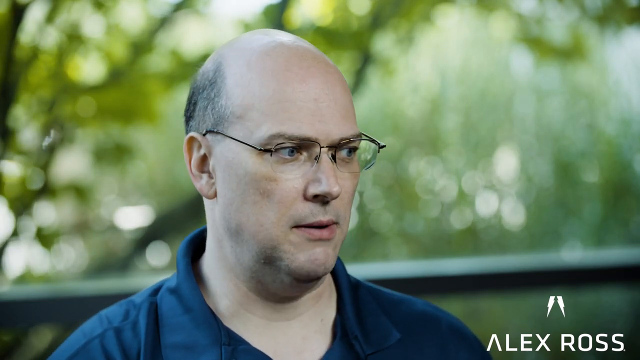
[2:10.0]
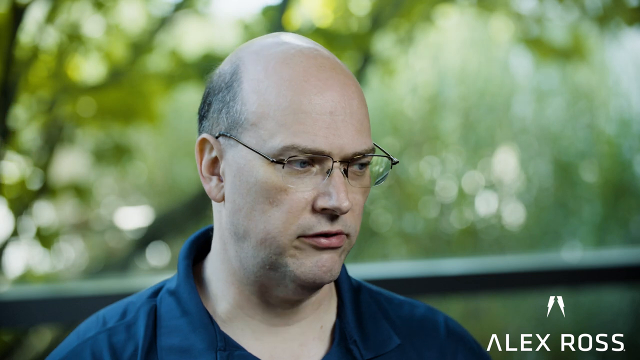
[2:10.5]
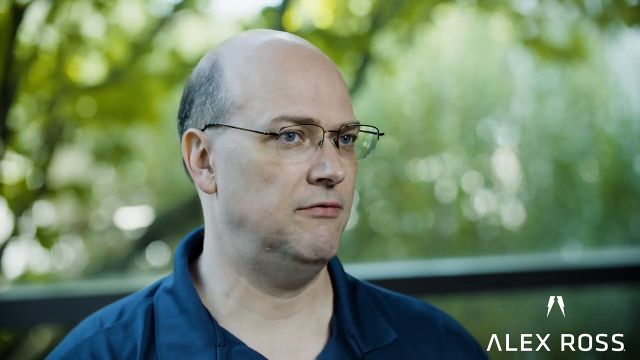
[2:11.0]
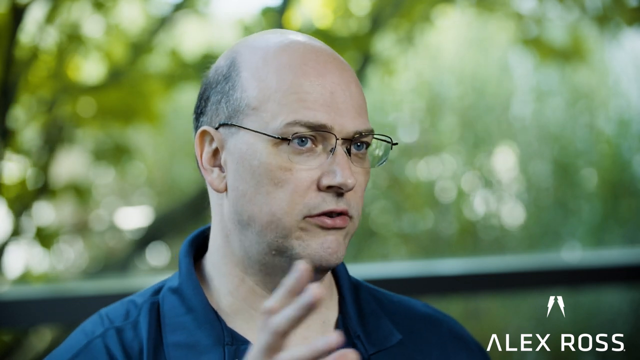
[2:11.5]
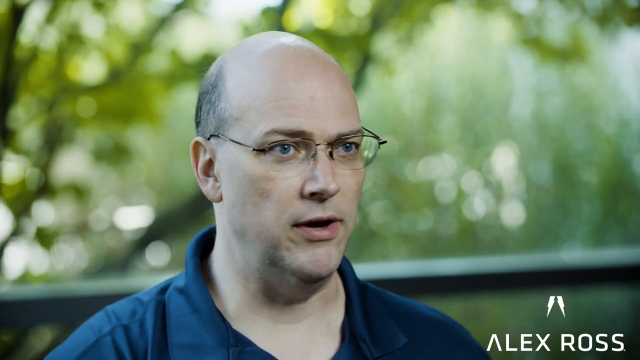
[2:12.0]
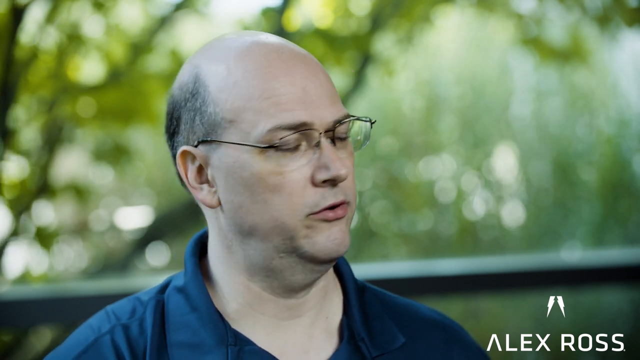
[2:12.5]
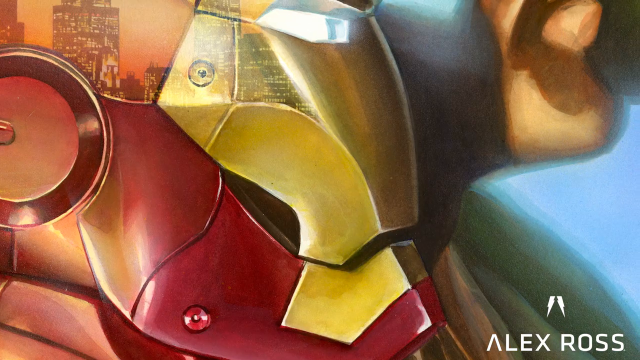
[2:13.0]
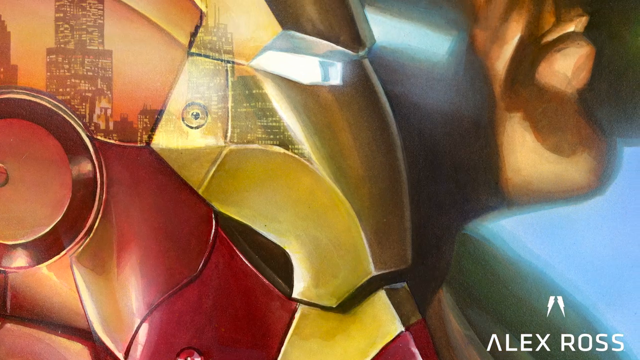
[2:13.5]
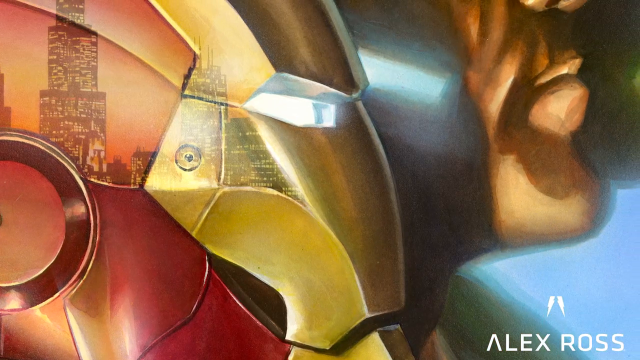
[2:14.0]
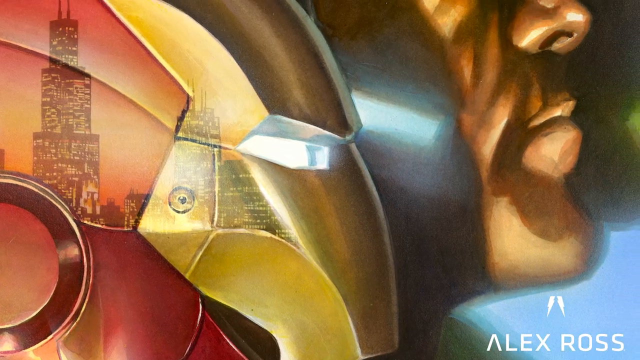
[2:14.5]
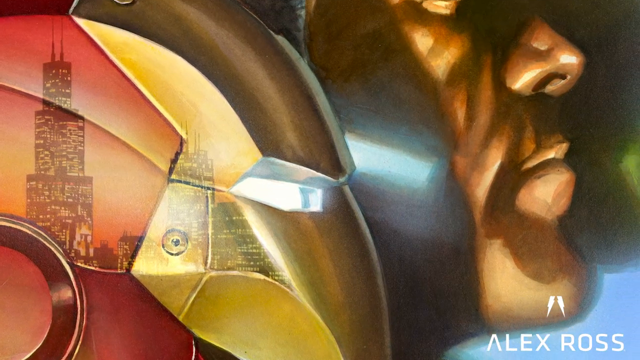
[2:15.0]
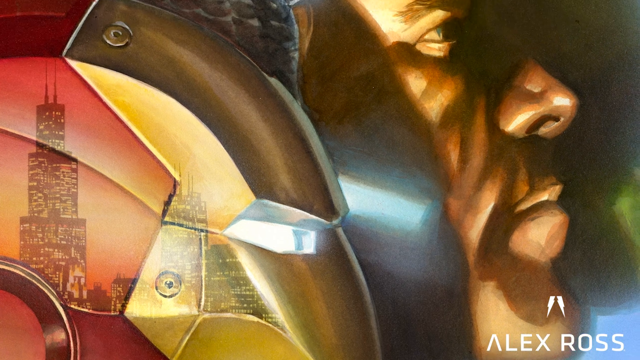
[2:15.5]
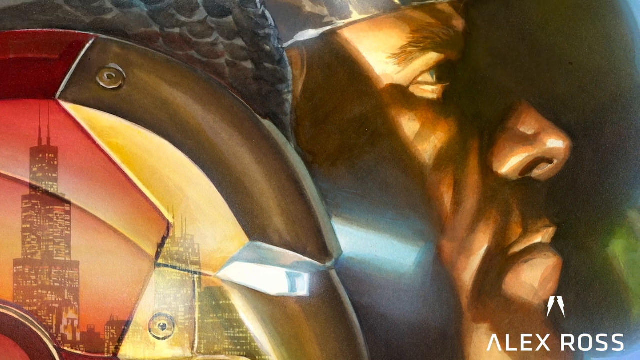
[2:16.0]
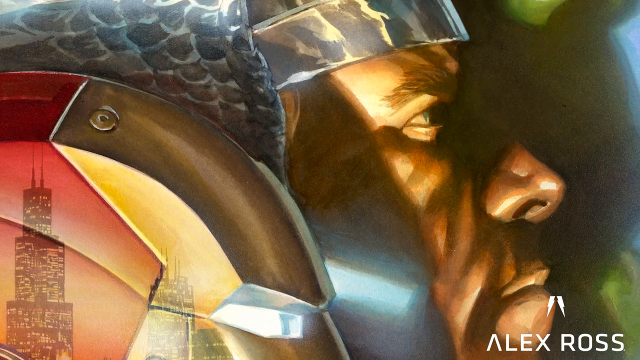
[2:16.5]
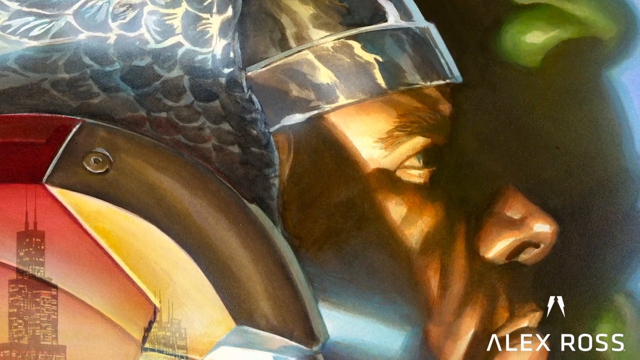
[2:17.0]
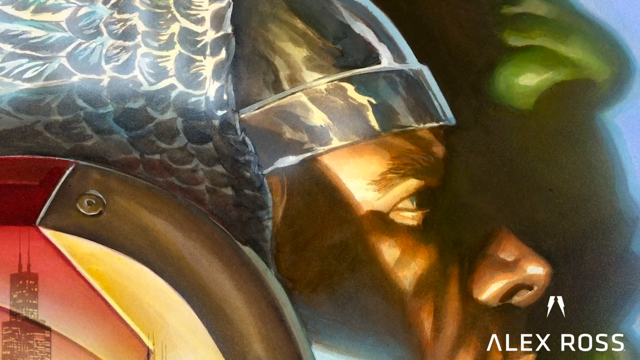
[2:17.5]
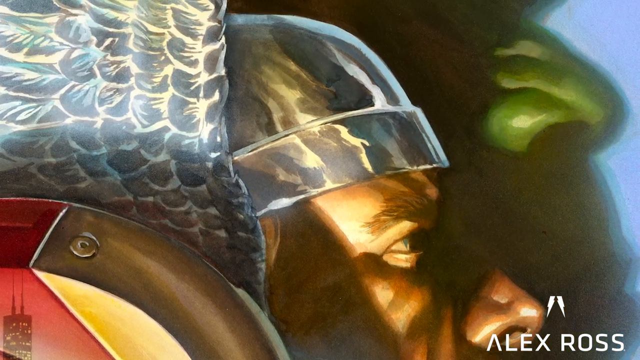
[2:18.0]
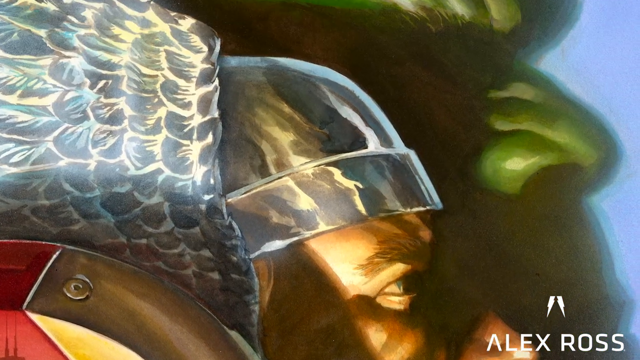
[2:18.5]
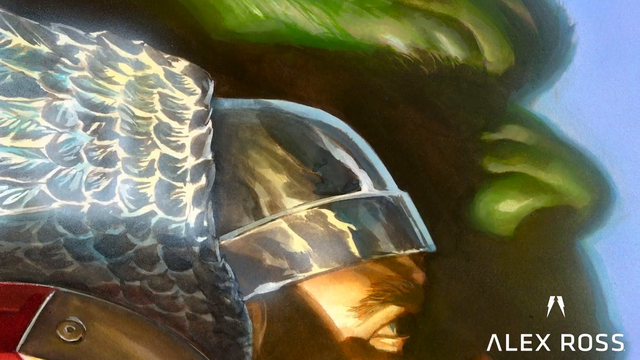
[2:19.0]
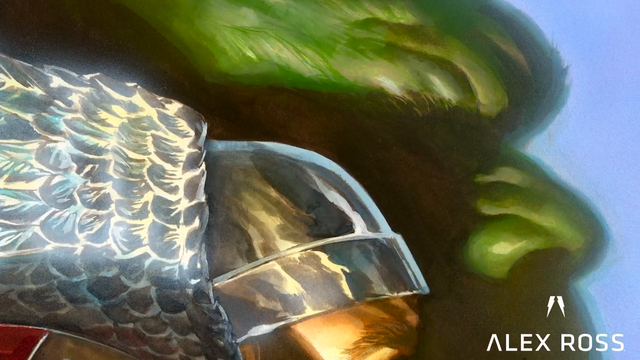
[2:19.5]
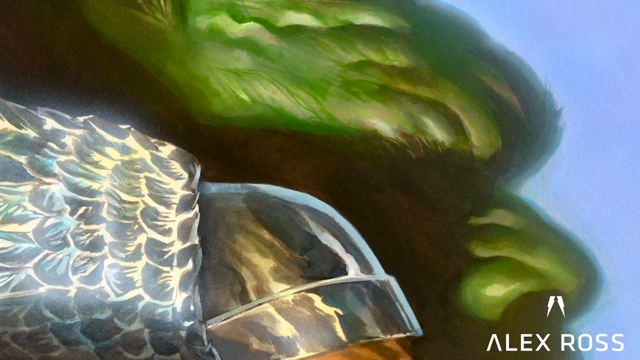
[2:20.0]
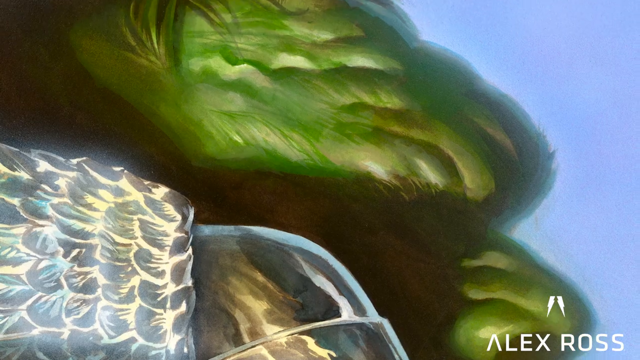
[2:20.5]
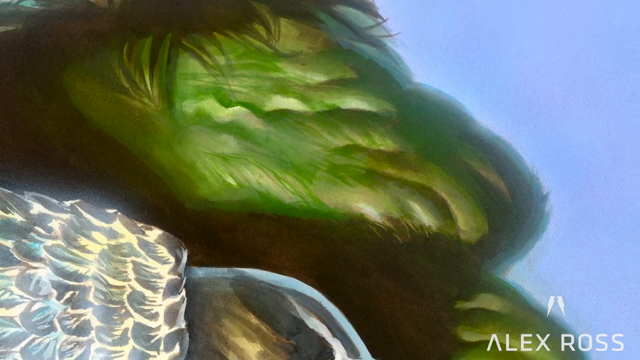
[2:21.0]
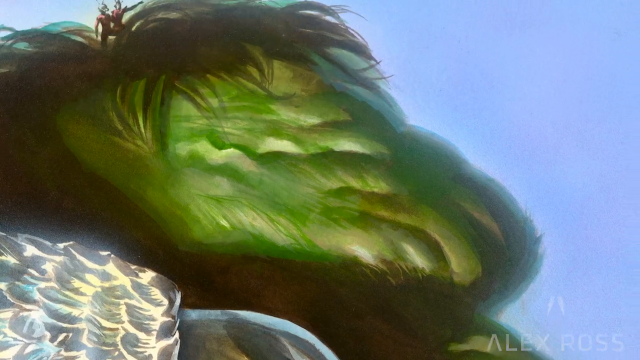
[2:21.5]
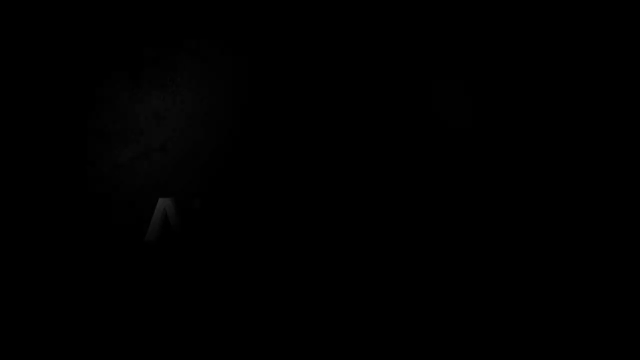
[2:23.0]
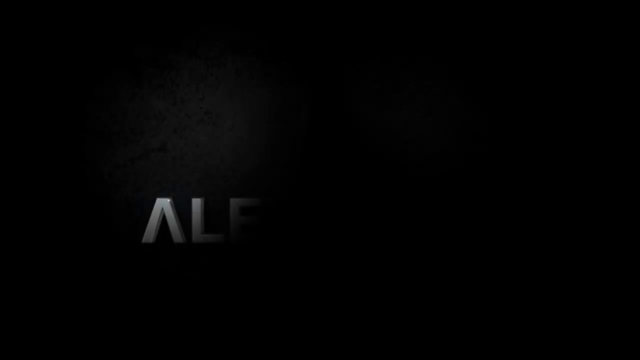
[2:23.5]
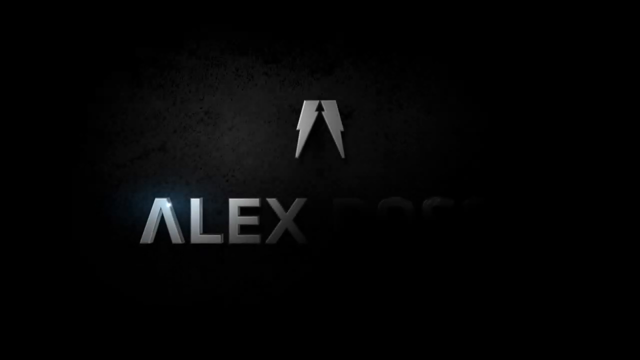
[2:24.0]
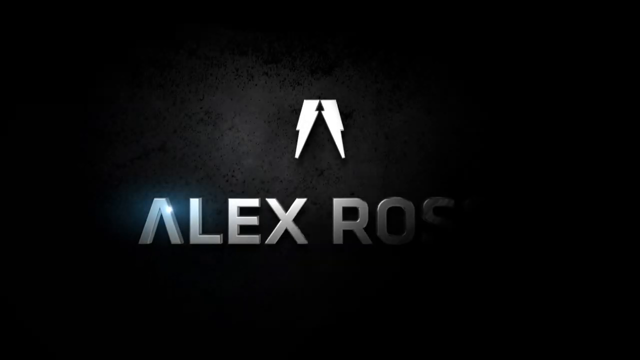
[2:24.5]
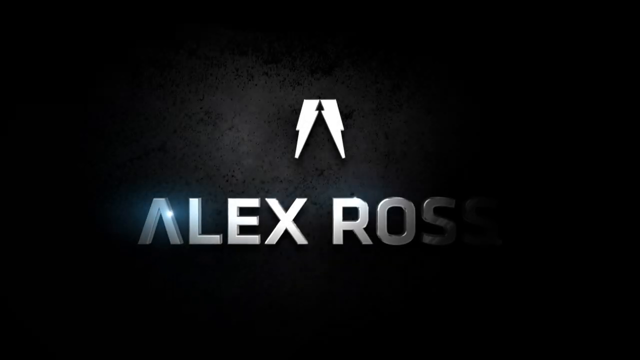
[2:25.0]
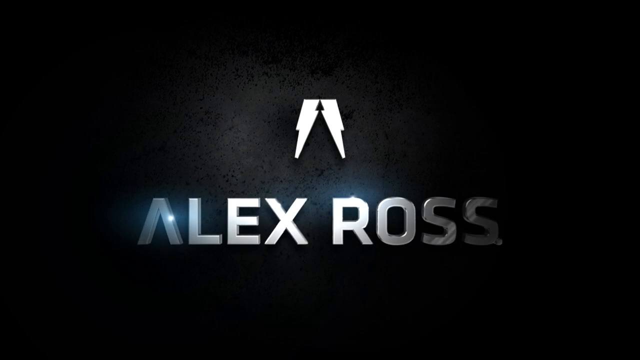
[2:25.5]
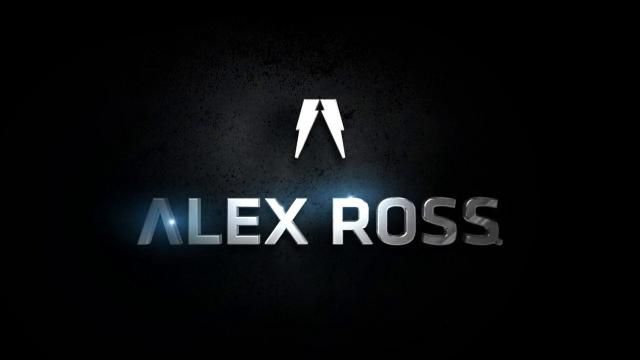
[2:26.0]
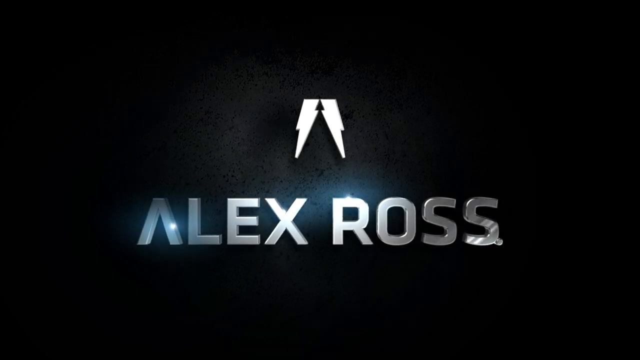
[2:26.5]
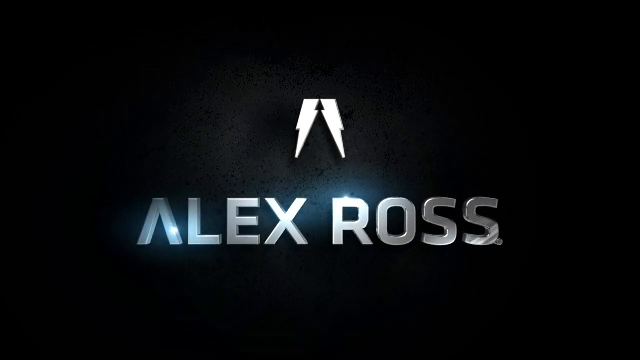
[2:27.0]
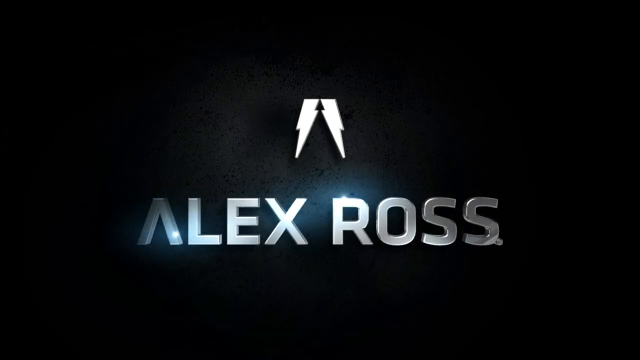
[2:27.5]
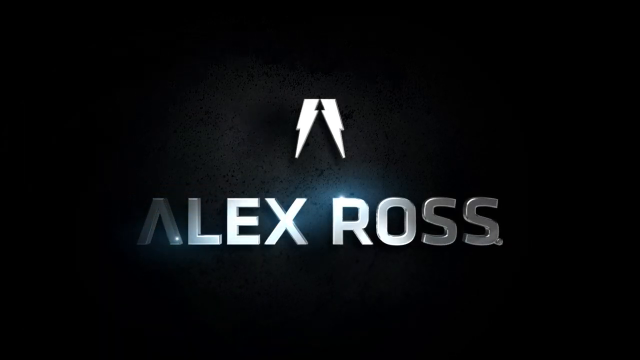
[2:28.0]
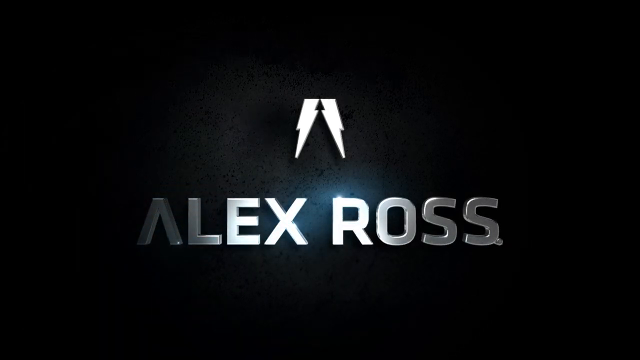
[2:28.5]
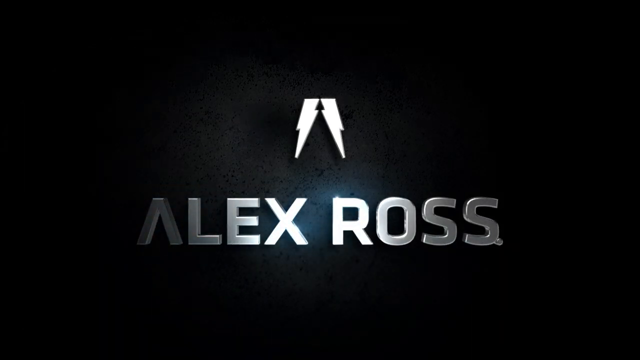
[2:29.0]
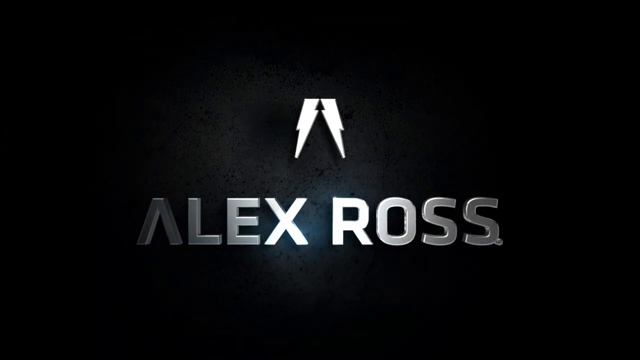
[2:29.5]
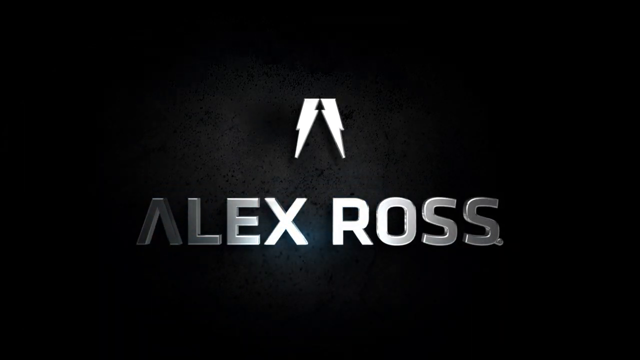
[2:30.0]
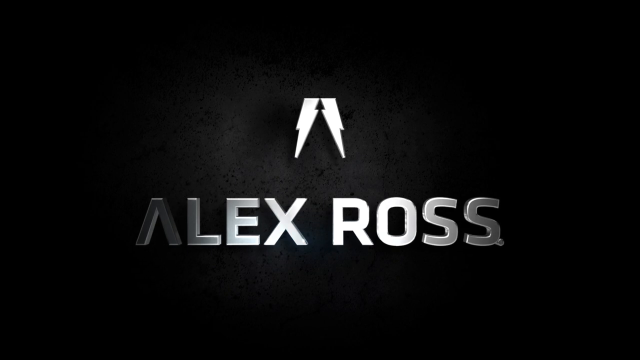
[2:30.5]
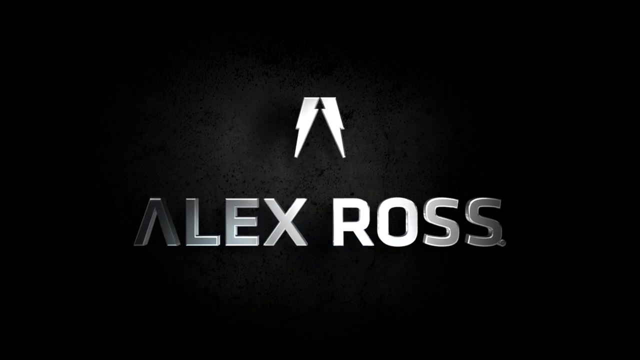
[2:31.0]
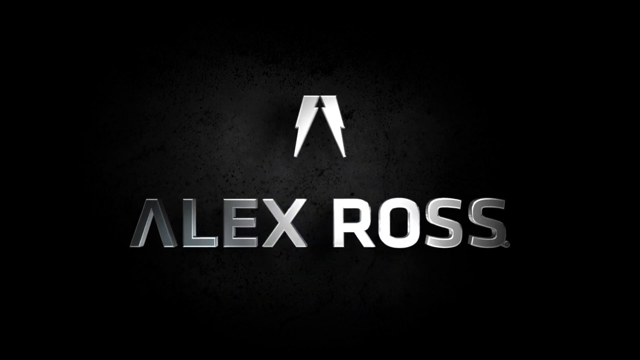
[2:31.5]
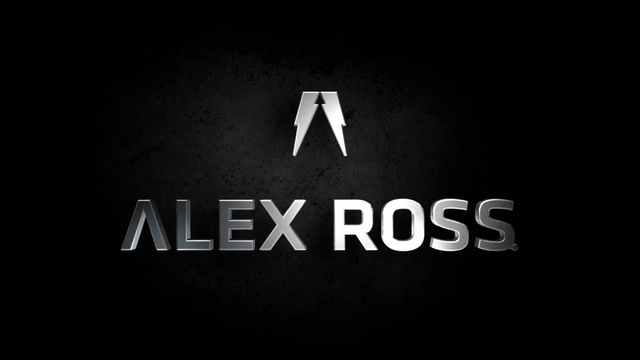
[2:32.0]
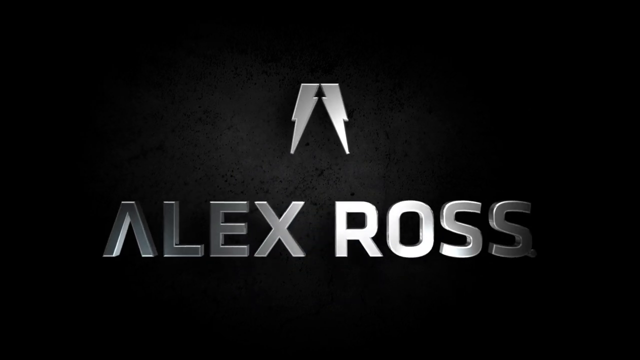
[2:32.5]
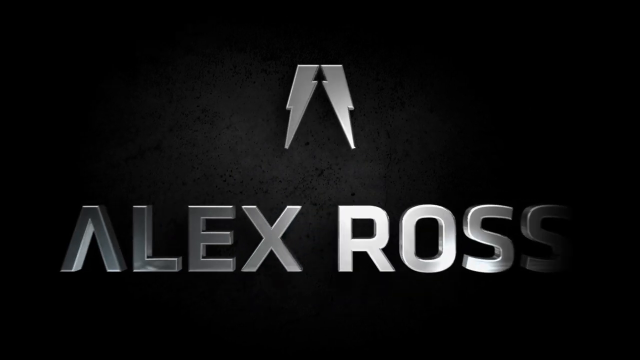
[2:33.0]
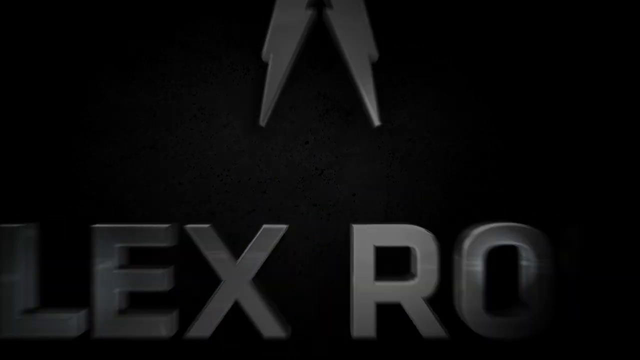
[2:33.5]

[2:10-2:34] The man has wire-framed glasses with black arms, and there are faded-out trees behind him. He looks down slightly towards the bottom right and gesticulates with his right hand. Another superhero then appears, this time in profile, with buildings reflected in his side. Hulk's large forehead and hair are shown, and then the screen goes black and the "Alex Ross" logo appears again from the left-hand side, letter by letter. The A has no horizontal line through the middle and is more like an upside-down V shape. A white and black logo is above the text. The letters are silvery and reflective, and the light shines on them and changes position across them. The background is black throughout this. The words "Alex Ross" and the logo then move towards the screen until they disappear completely.